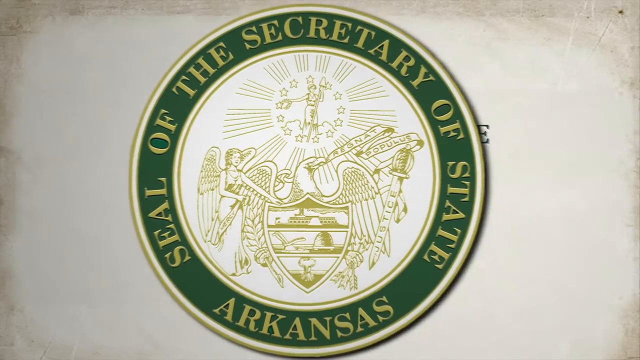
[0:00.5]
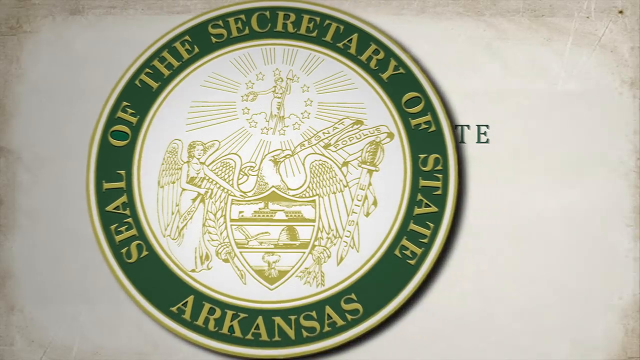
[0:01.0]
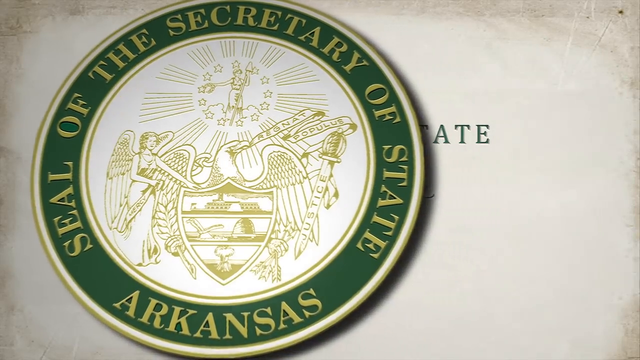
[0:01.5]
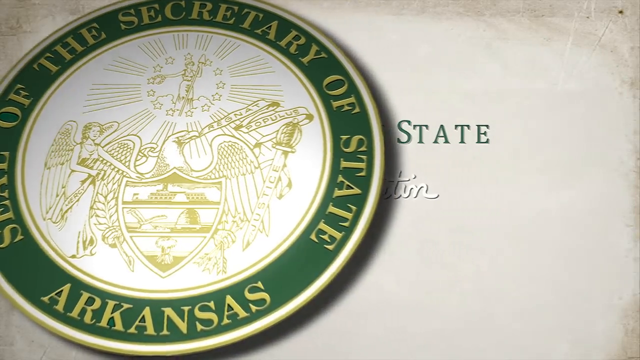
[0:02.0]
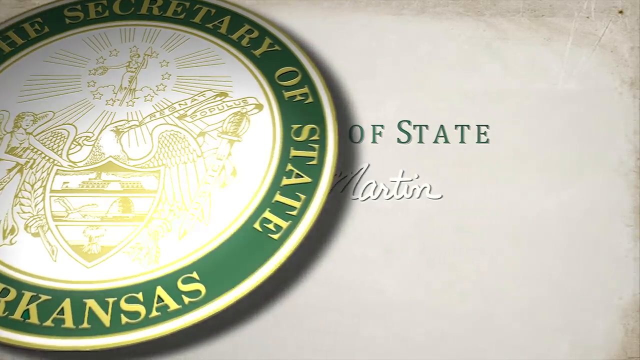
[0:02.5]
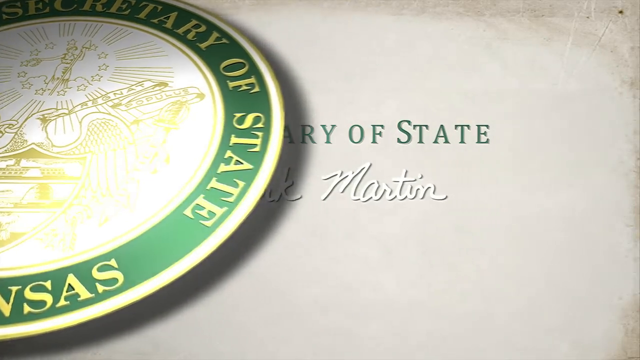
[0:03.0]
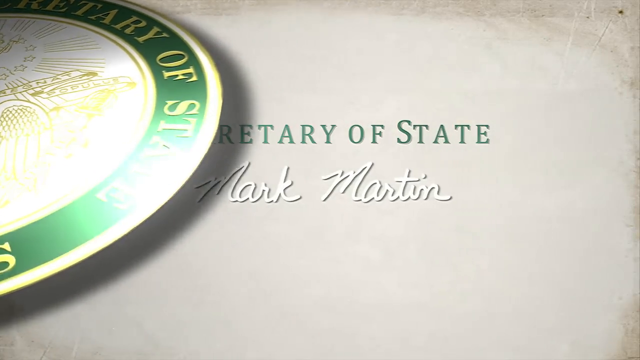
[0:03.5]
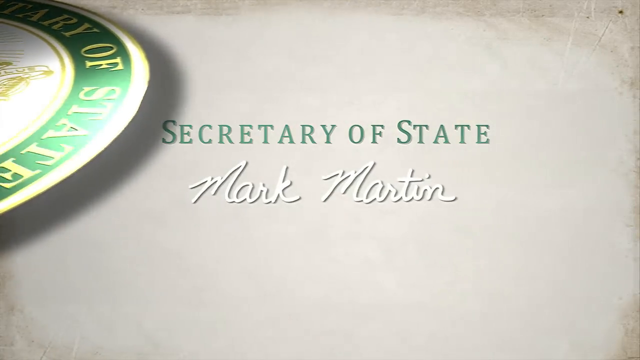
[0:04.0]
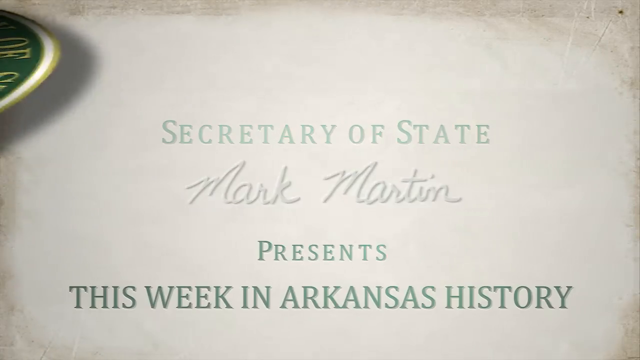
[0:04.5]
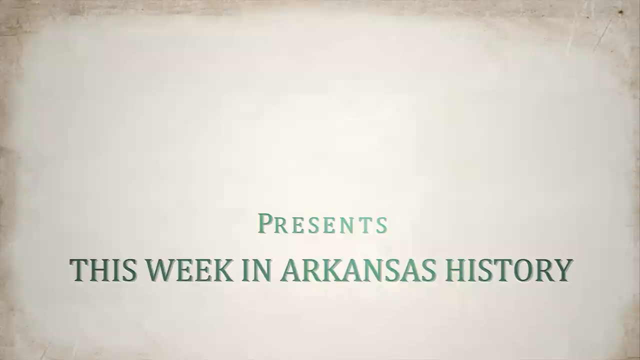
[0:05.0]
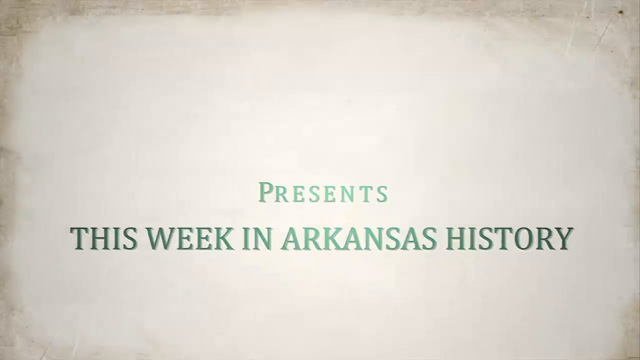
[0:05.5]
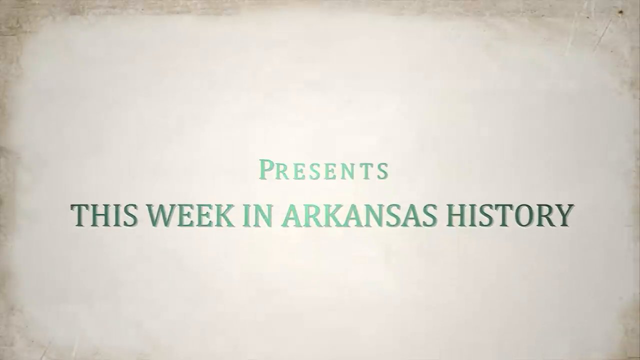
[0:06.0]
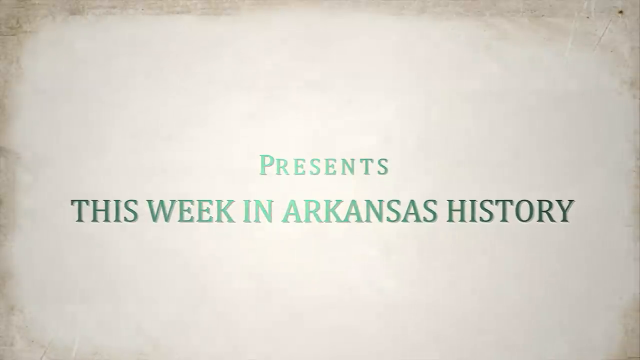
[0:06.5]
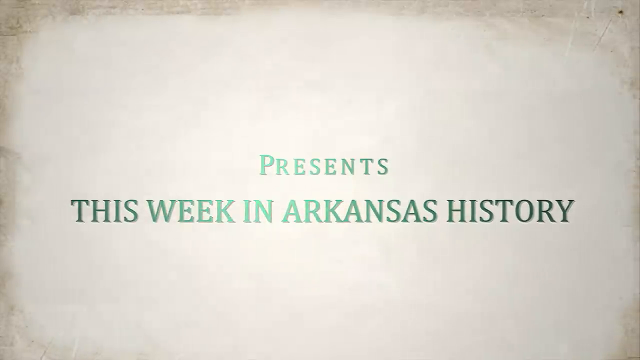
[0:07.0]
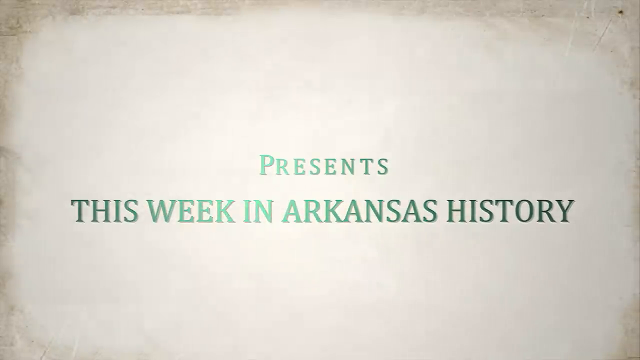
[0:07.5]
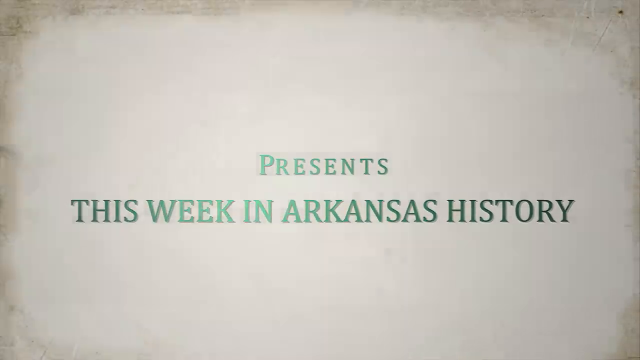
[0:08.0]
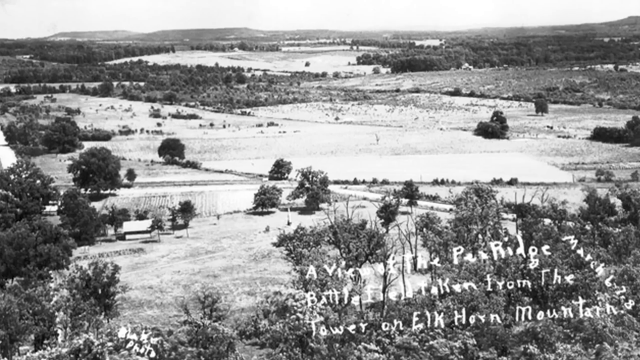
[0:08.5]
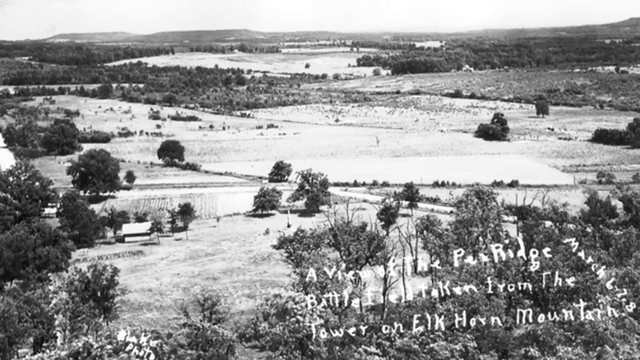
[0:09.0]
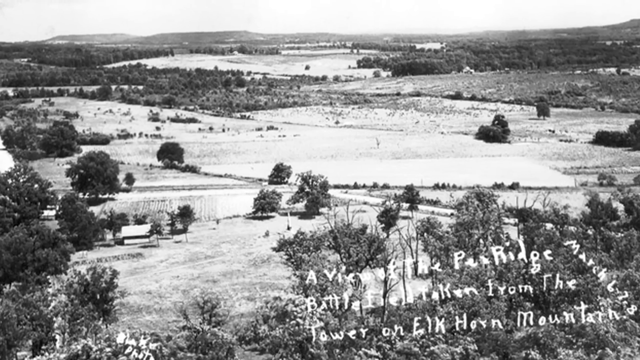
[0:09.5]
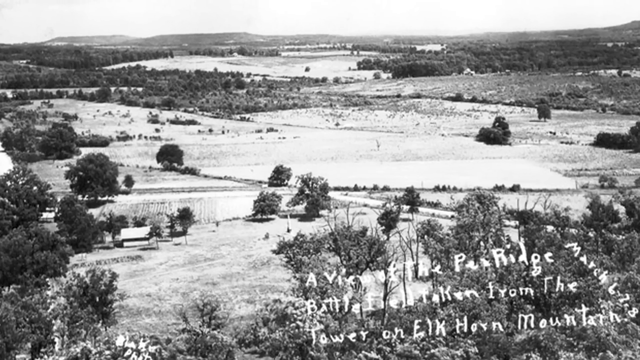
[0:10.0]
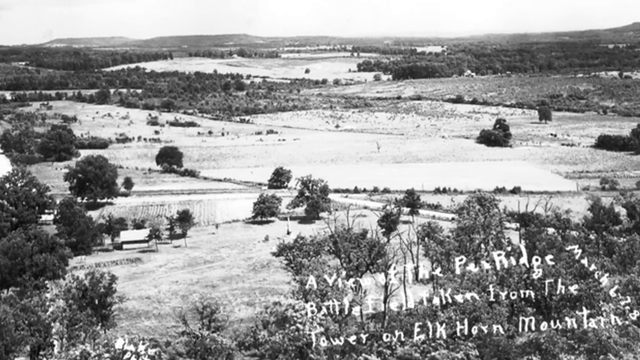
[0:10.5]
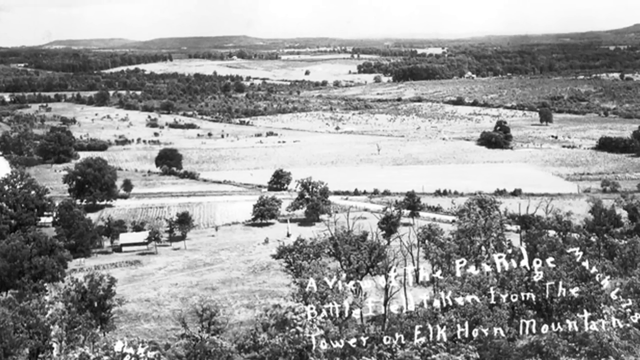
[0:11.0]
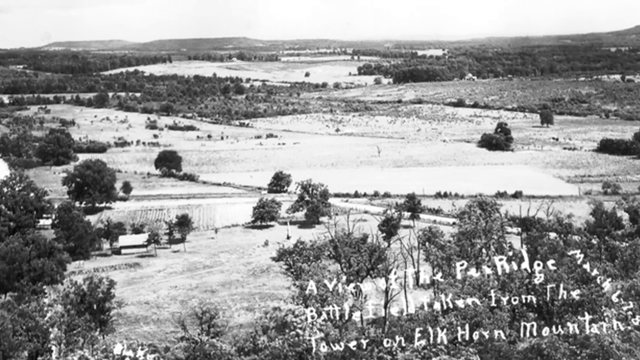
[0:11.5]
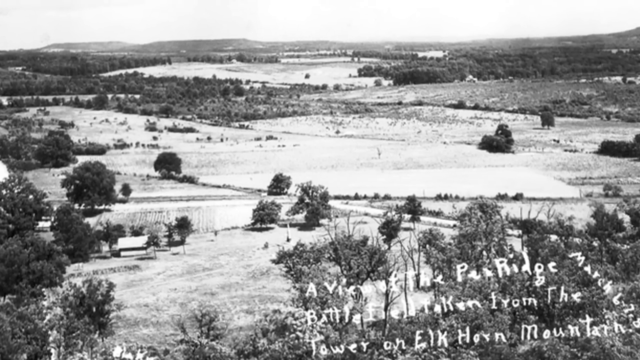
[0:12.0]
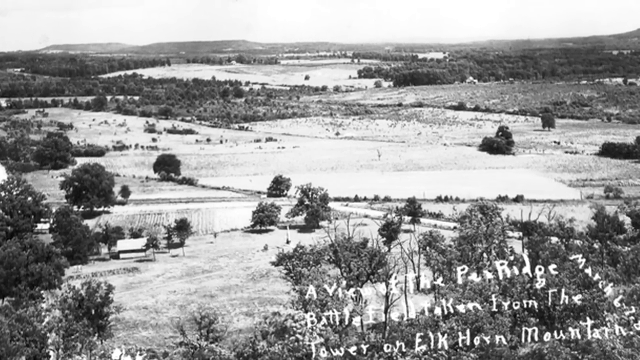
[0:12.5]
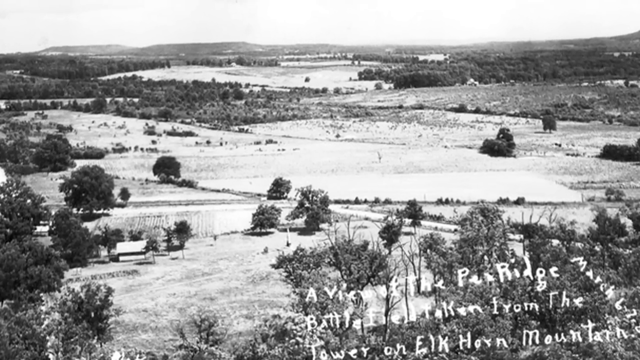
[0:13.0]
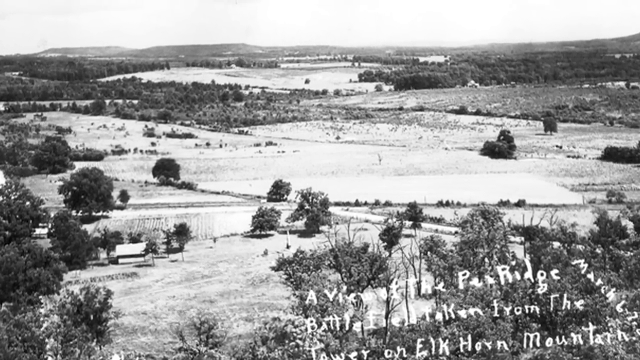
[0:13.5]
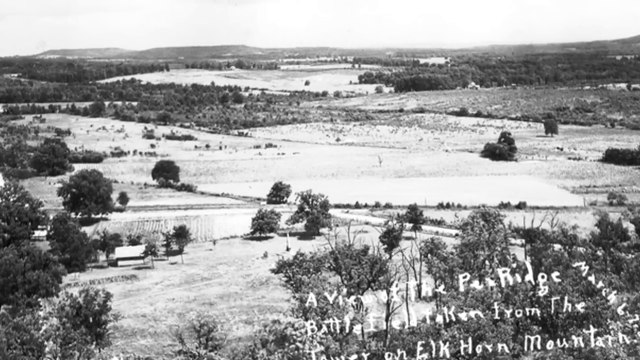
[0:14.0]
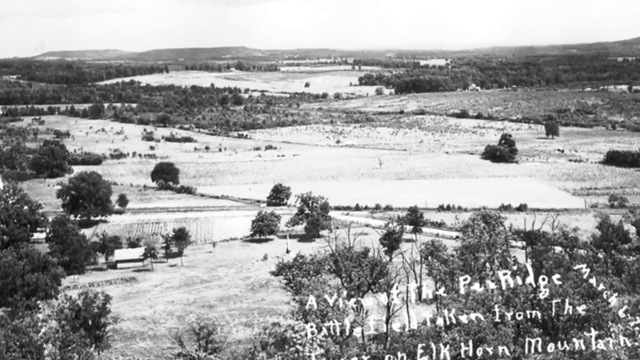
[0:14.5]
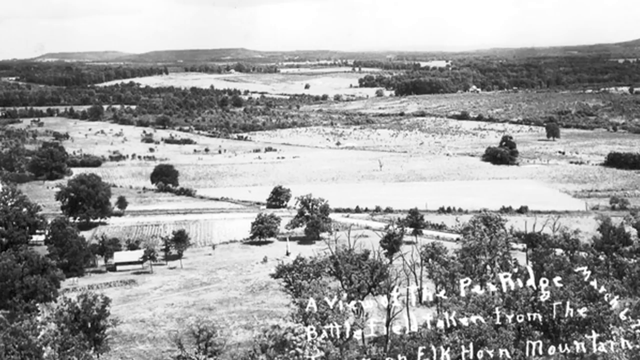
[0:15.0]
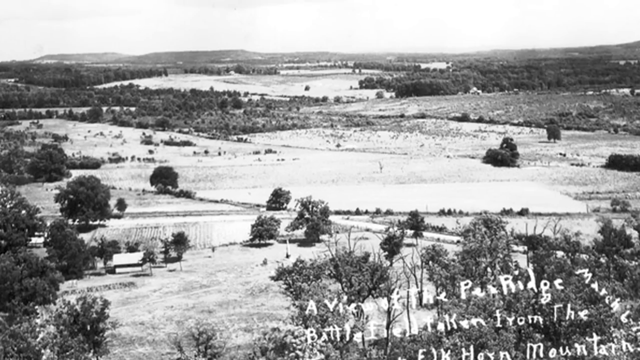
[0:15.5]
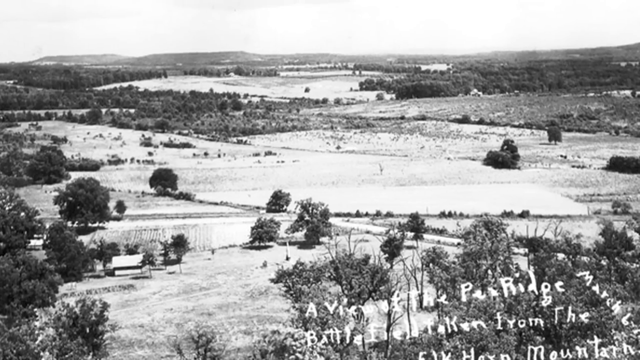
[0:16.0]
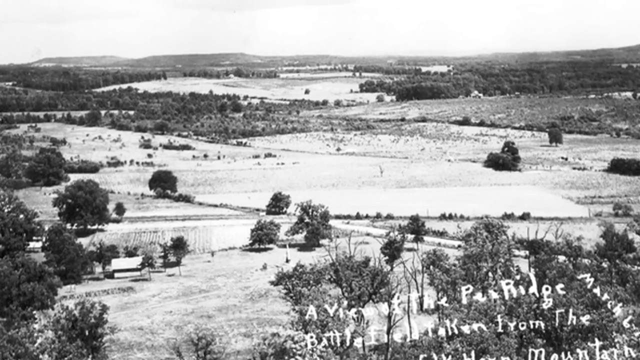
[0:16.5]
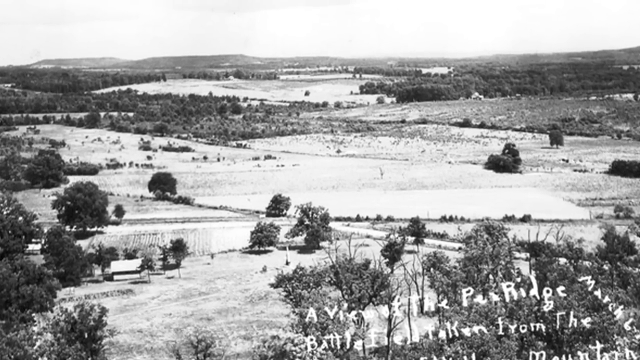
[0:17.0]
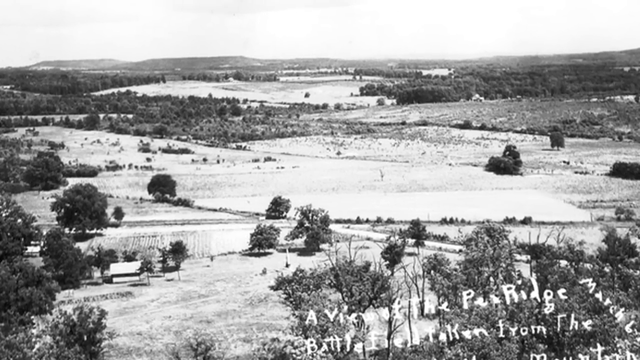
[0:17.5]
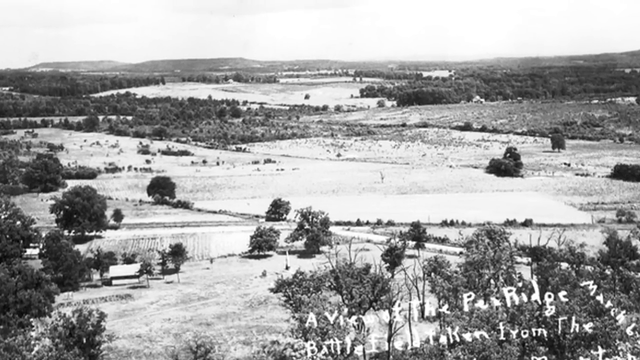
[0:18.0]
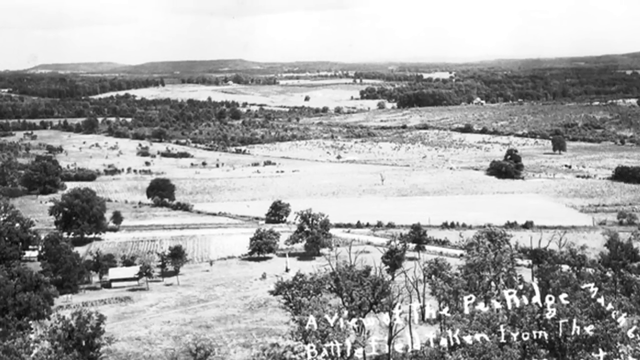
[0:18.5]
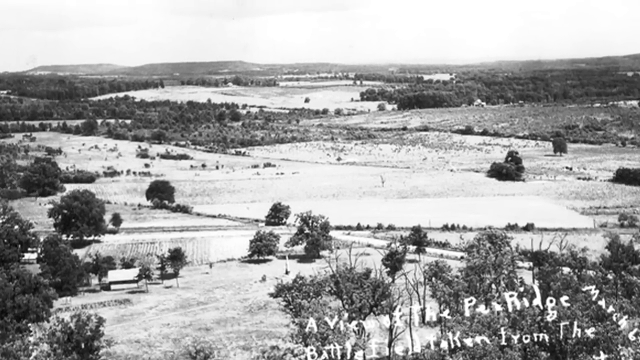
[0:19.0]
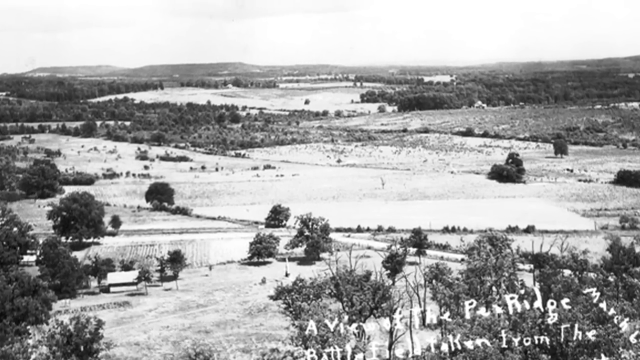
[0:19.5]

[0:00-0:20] The video opens on an empty black background. A white background fades in, and on it is the circular seal of the Secretary of State for Arkansas. The seal consists of a green ring with gold text on it, and in the middle of the ring is an illustration of an eagle with a shield before it. To the left of the eagle is an angel, and above it is a person holding up a mop. To the right is a sword that says "Justice", and the eagle holds in its mouth a flag or banner that says "Regnat Populus". The seal slowly floats to the left, revealing in its place green text in the middle of the frame that says "Secretary of State". Beneath that is white text that says "Mark Martin", beneath that gray text that says "Presents", and beneath that darker gray text that says "This Week in Arkansas History". The "Secretary of State" and "Mark Martin" text fades away, and "Presents This Week in Arkansas History" rises into the middle of the frame and turns green. The video fades to black, then fades back in on a black-and-white photo of a vast field from an old time, with white text in the lower right portion. The view pans up and closer to the photo. A body of water is in the upper part, with hills on the horizon and a white sky. The field is dotted with trees, and there is at least one house and a small farm in the lower left corner.